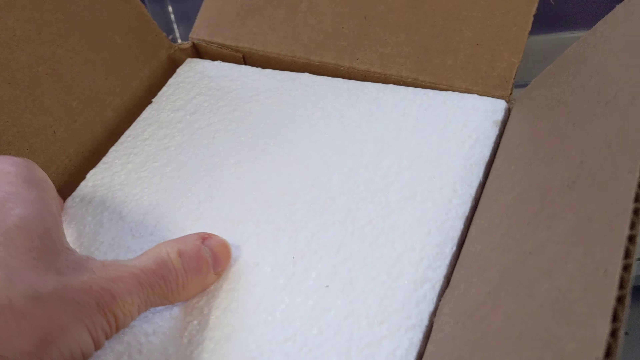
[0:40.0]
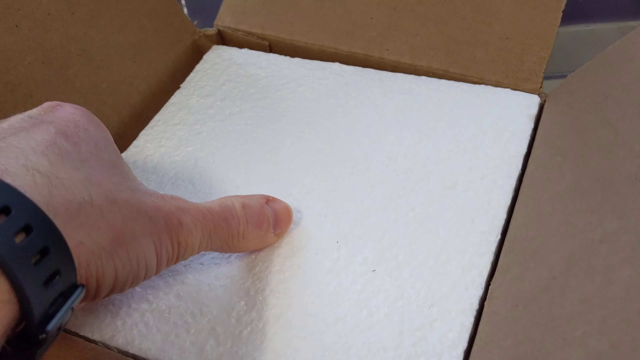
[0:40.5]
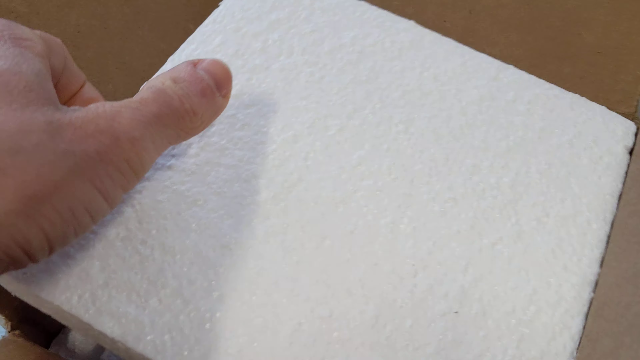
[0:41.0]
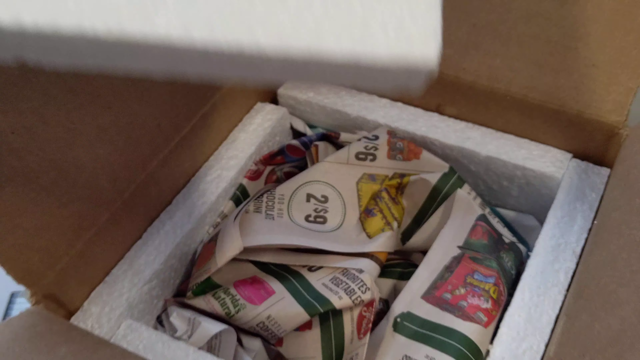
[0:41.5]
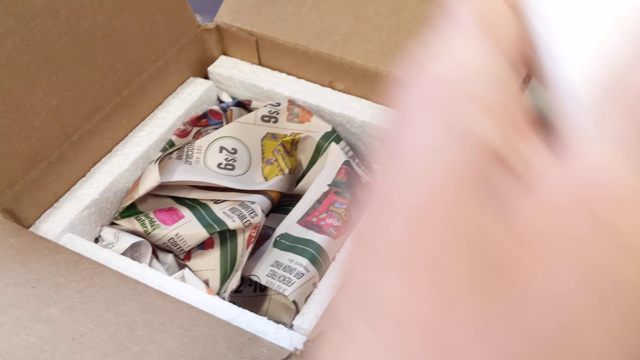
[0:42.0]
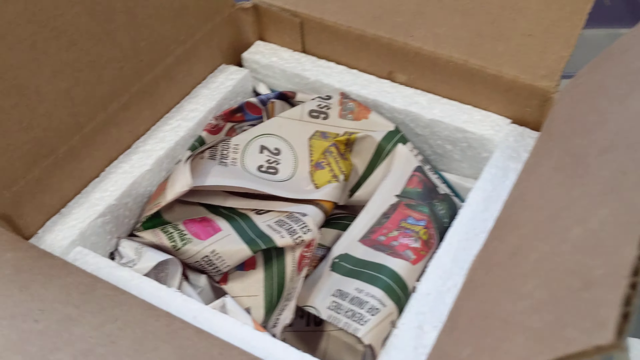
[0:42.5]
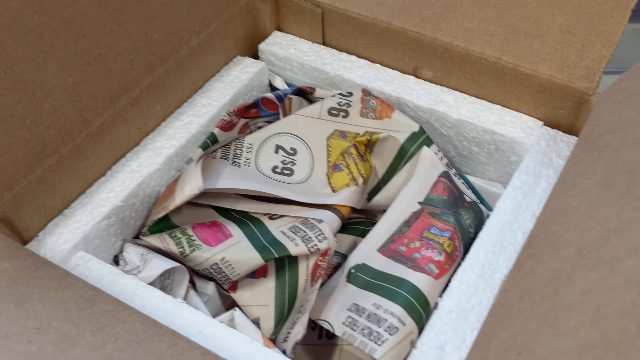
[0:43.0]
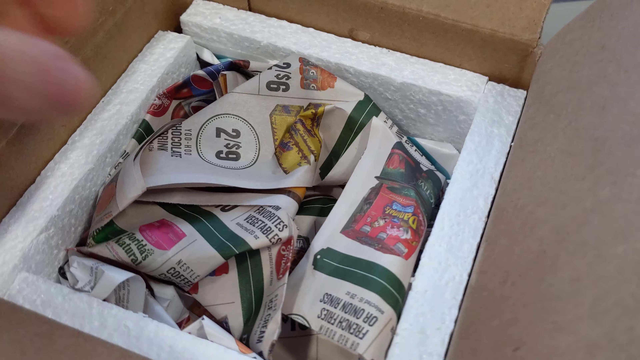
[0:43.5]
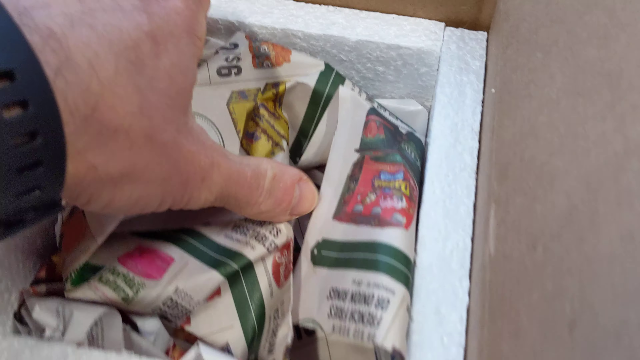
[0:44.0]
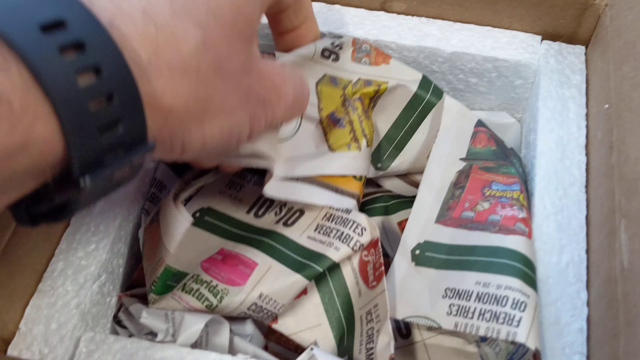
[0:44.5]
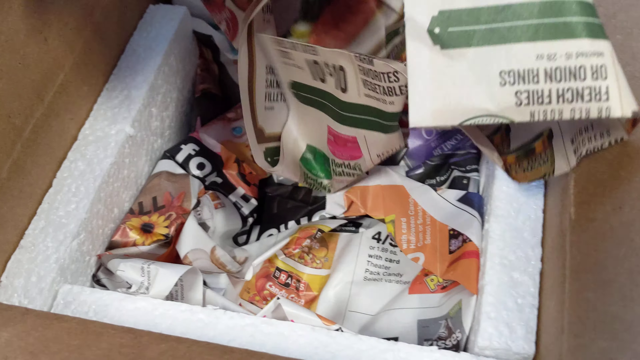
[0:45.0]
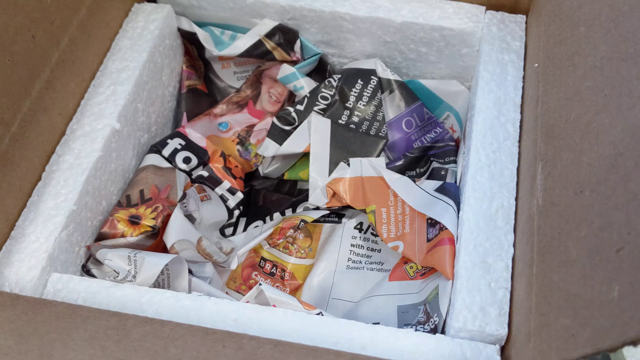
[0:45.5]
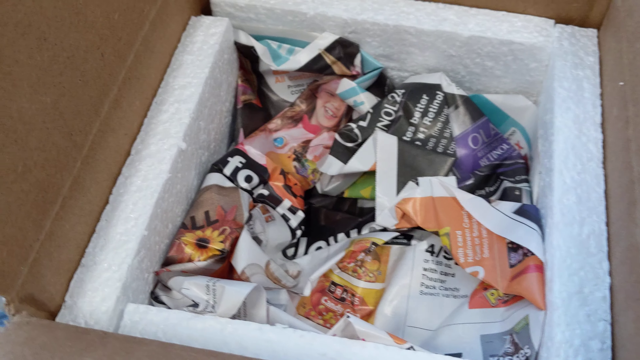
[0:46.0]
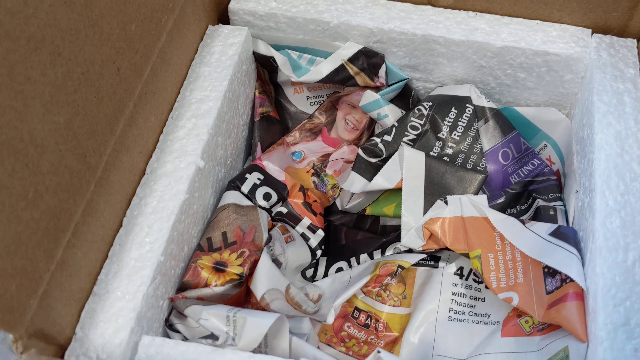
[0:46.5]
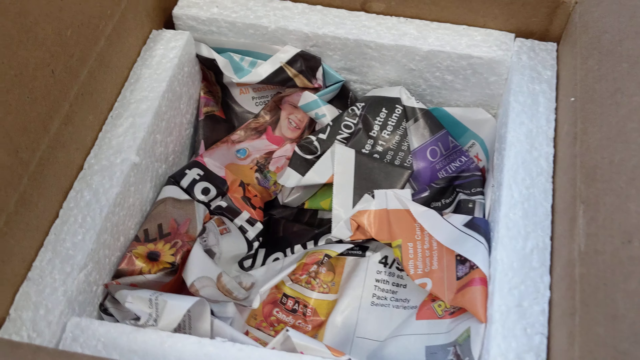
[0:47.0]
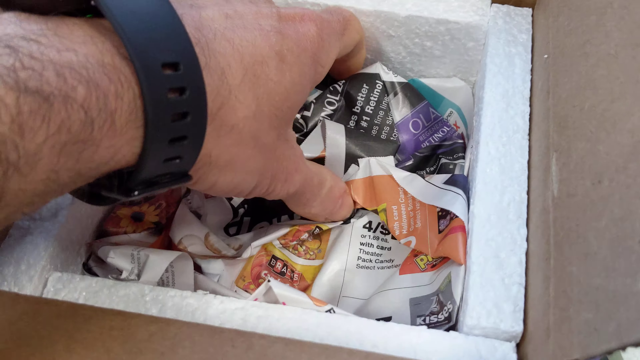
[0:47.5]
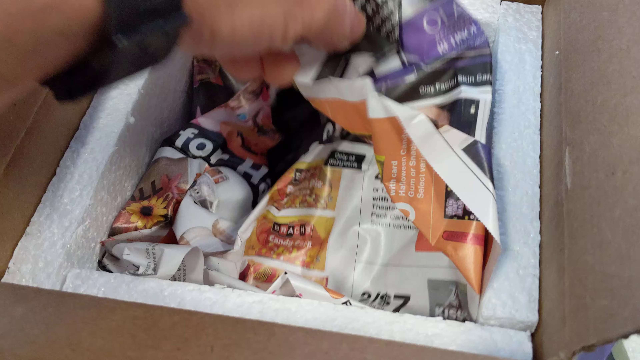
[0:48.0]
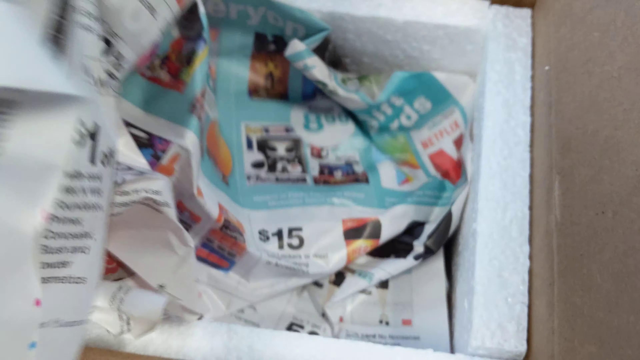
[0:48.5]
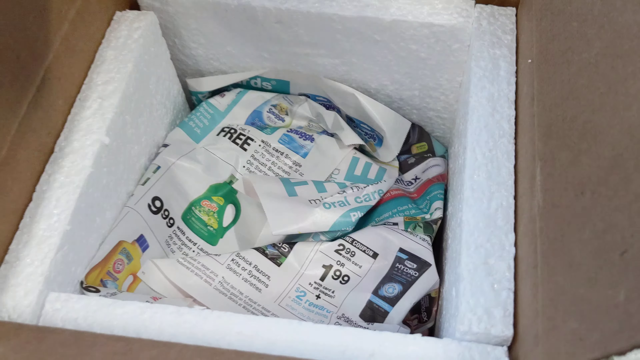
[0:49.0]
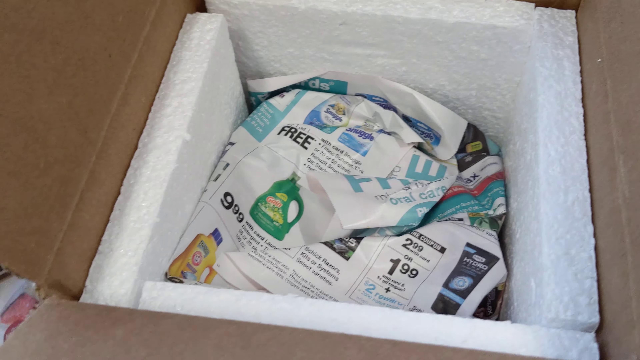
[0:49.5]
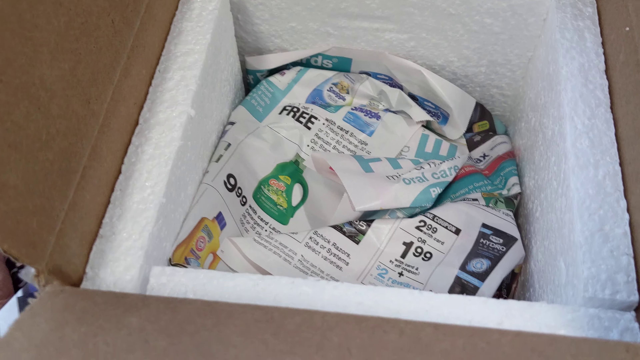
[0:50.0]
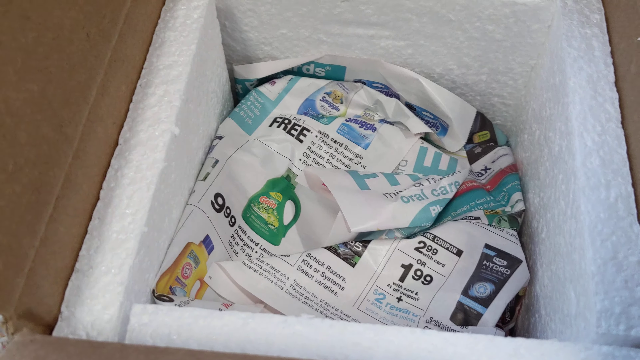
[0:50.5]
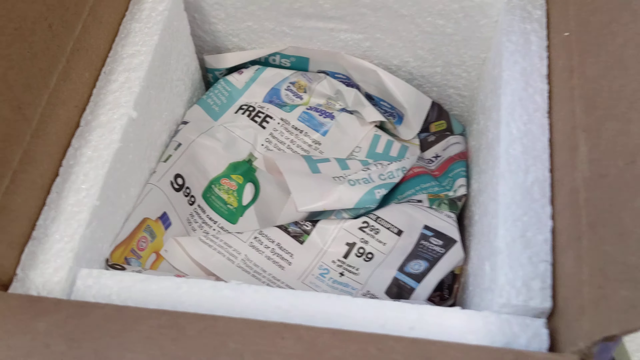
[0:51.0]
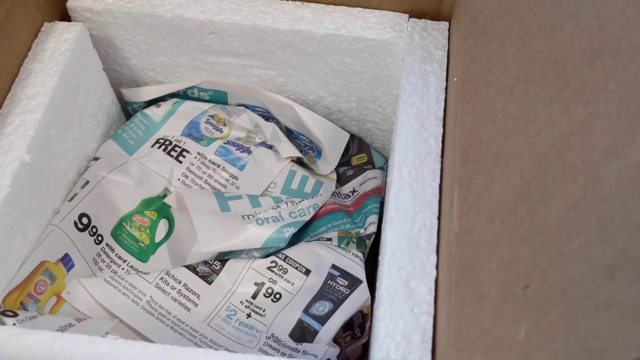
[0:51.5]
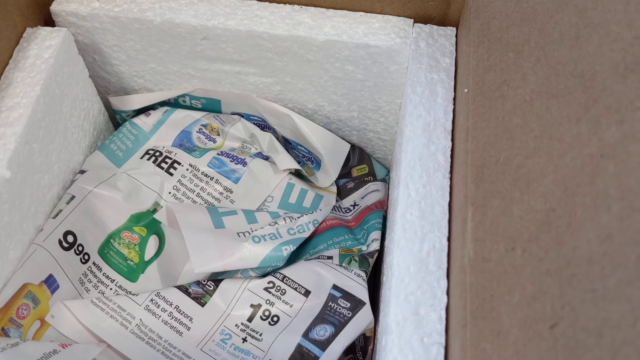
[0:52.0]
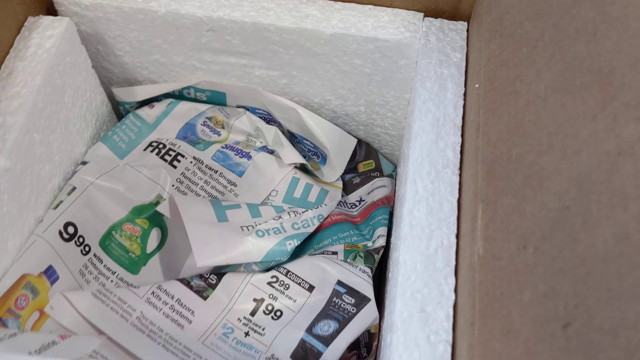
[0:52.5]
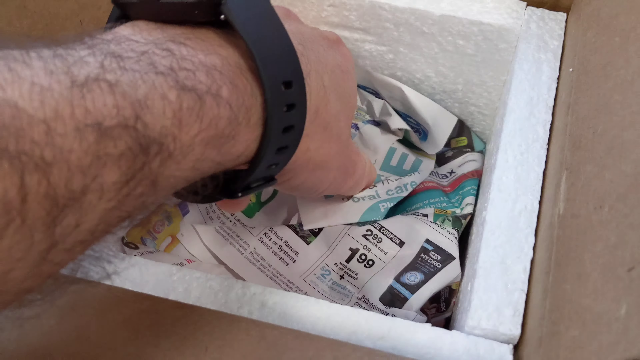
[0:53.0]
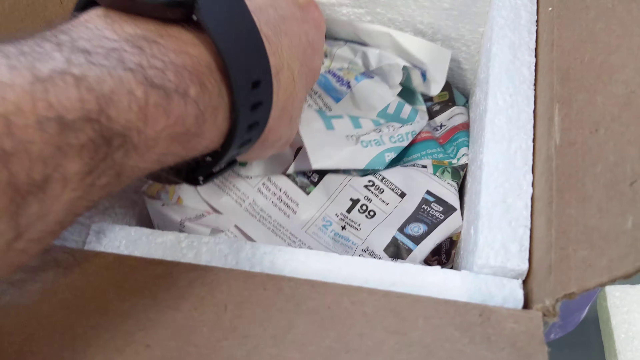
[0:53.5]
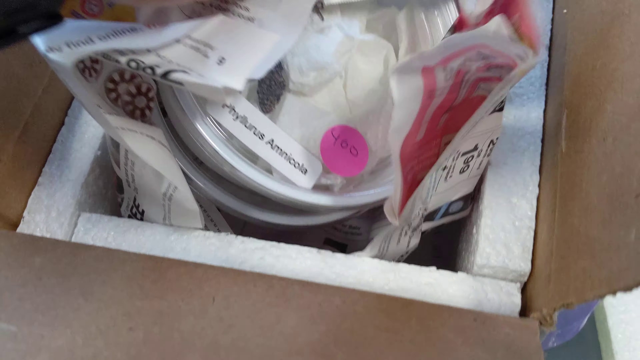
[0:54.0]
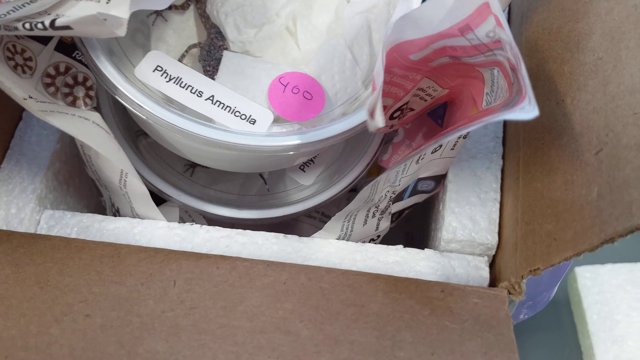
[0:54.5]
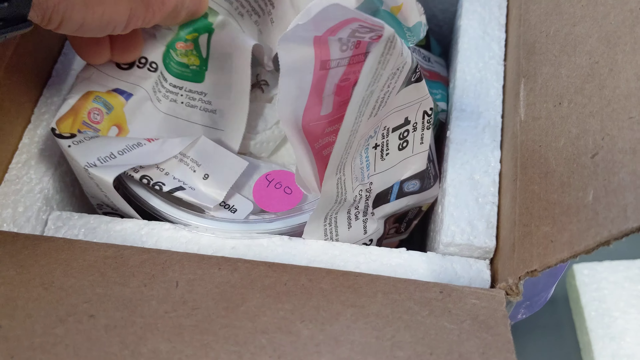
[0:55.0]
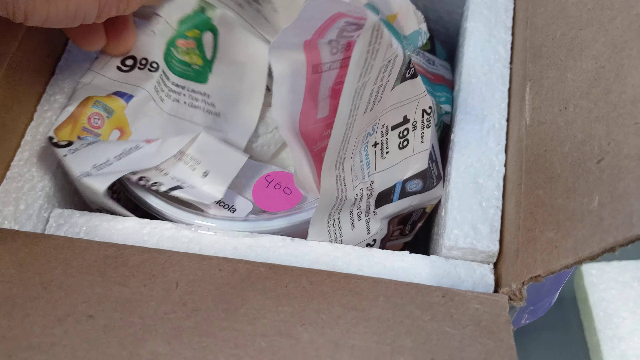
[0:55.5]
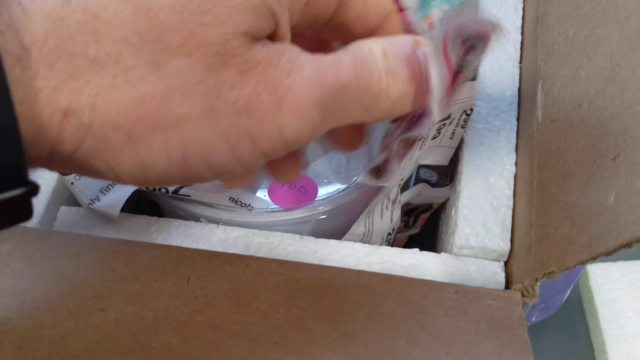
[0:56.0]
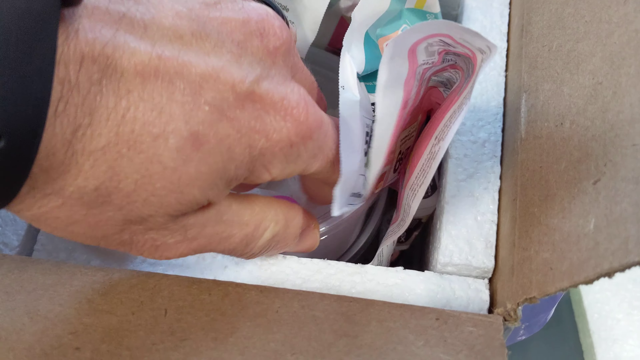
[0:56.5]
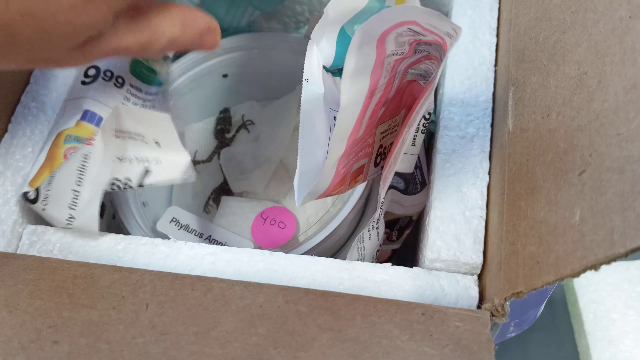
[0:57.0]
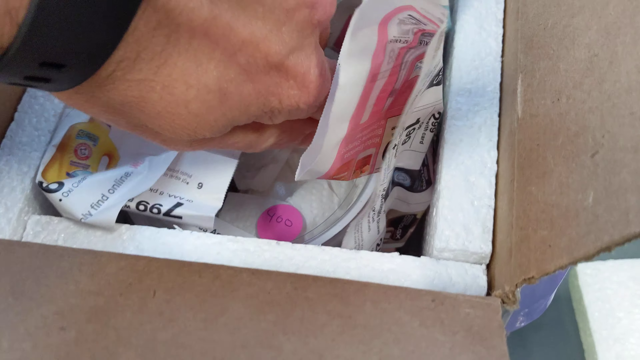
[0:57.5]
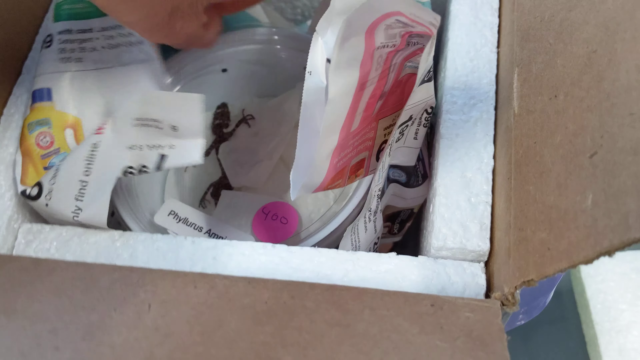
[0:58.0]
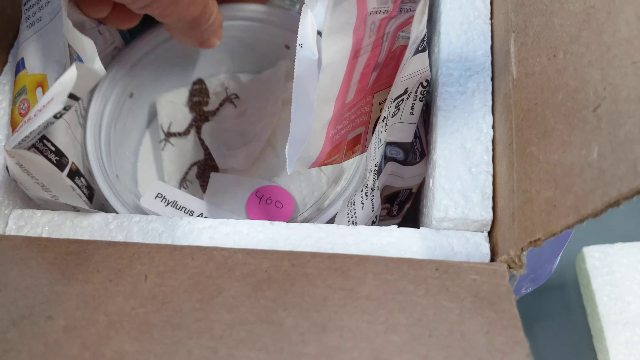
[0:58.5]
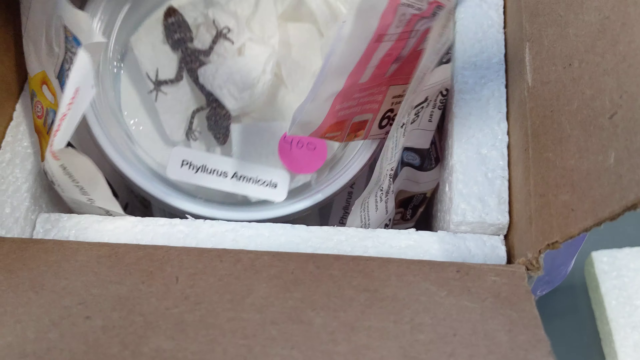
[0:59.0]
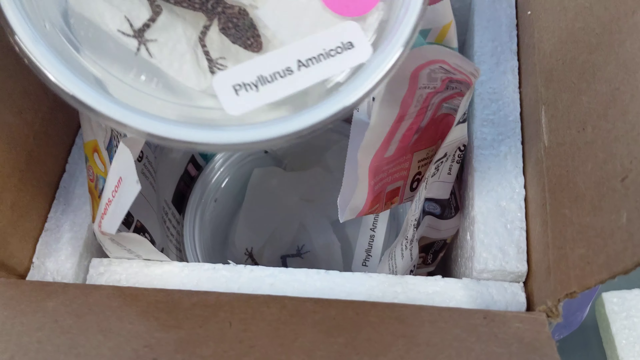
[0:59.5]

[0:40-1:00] The left hand removes the white polystyrene cover, putting its fingers underneath the left-hand side and lifting it upward and away from the box. This reveals some screwed-up newspaper, or possibly paper from a sales catalogue, with print and writing on it. The person lifts the paper up and out of the box, revealing another piece beneath, which is also lifted out, revealing a third piece. While trying to lift the third piece, the person accidentally also picks up a round tub that was under the paper. Through its see-through lid a little amphibian of some variety is just visible. The lid says "Phyllurus Amnicola" and also has a little pink round sticker on it.